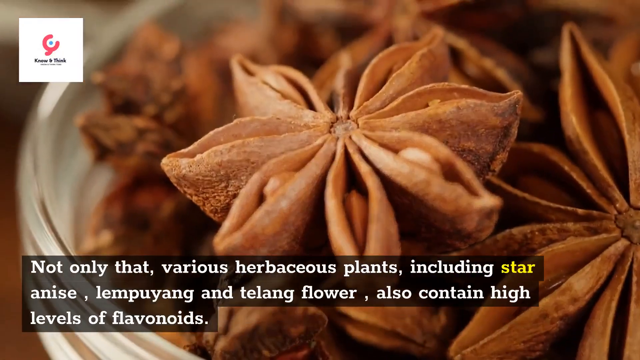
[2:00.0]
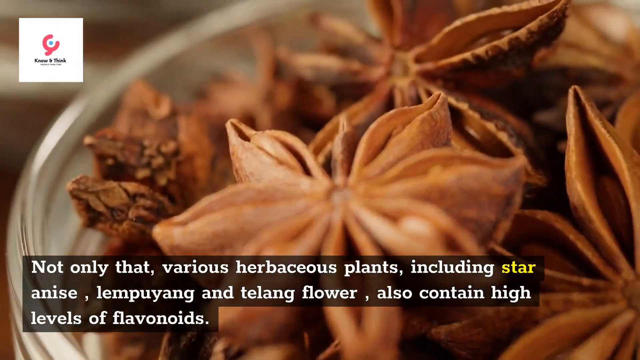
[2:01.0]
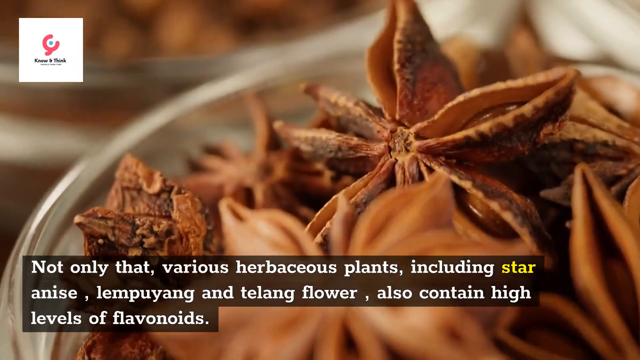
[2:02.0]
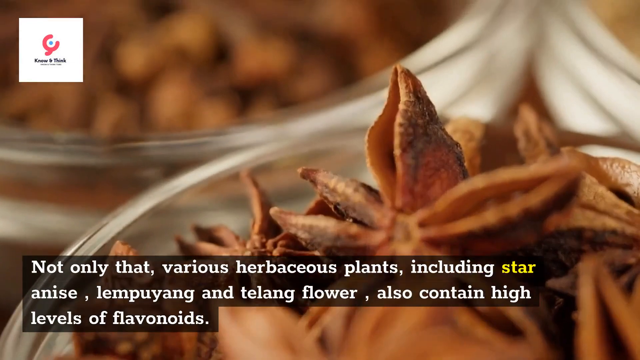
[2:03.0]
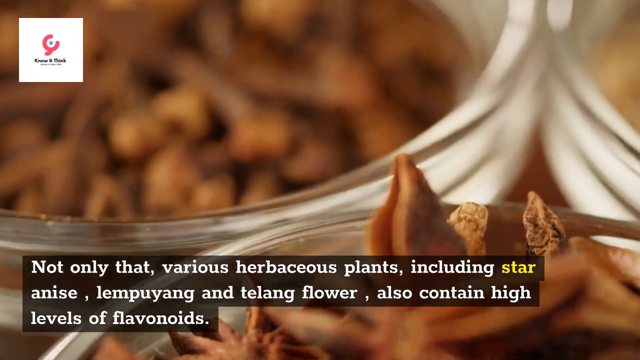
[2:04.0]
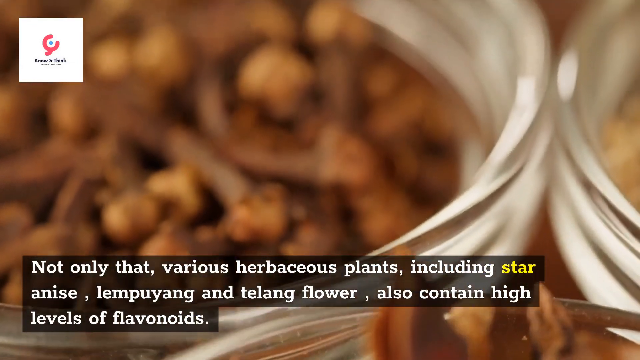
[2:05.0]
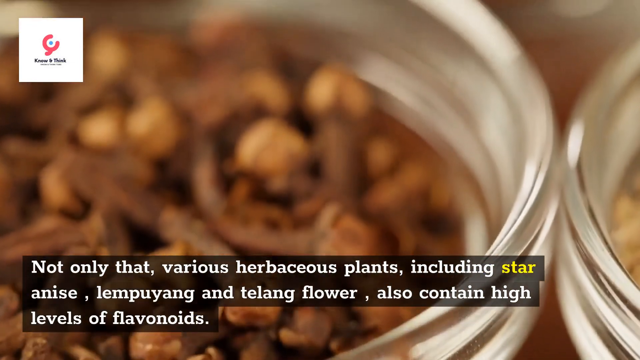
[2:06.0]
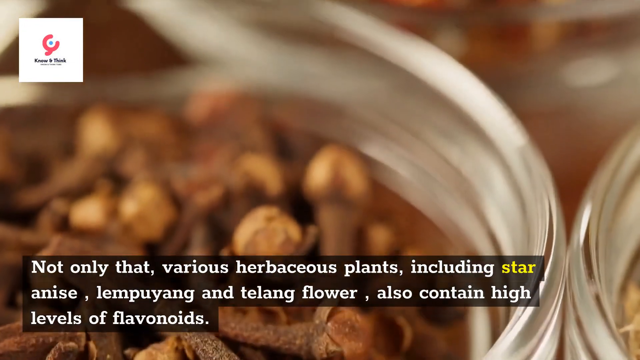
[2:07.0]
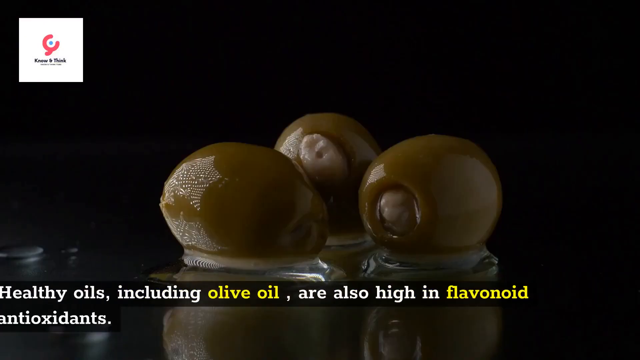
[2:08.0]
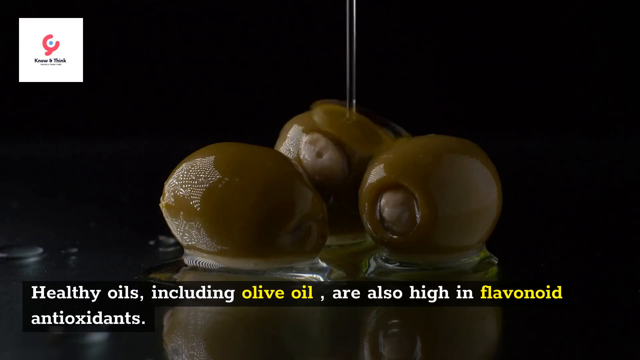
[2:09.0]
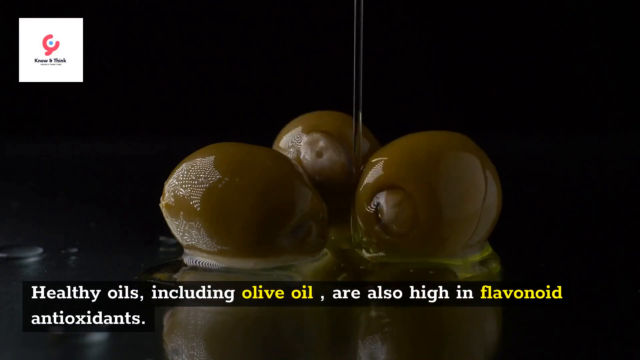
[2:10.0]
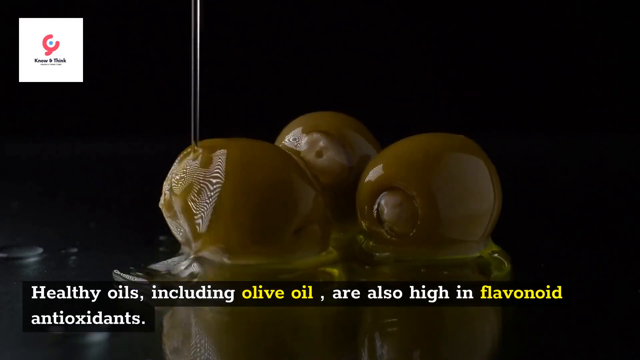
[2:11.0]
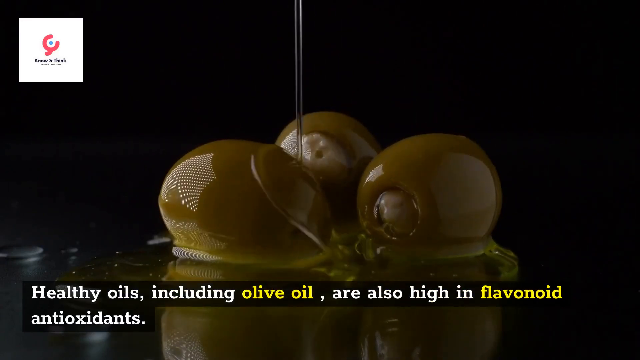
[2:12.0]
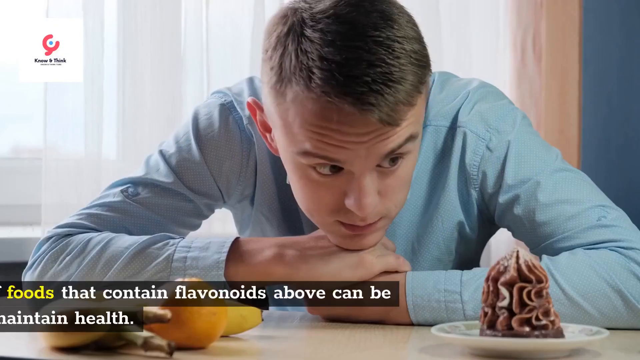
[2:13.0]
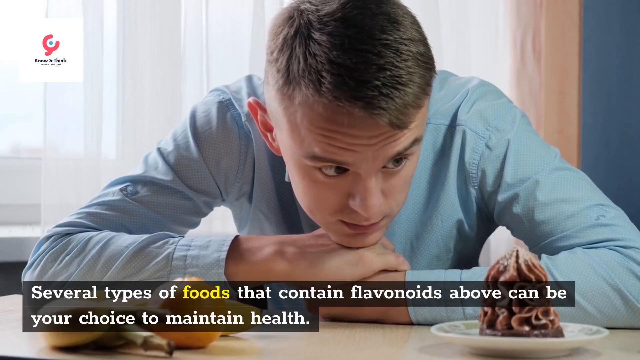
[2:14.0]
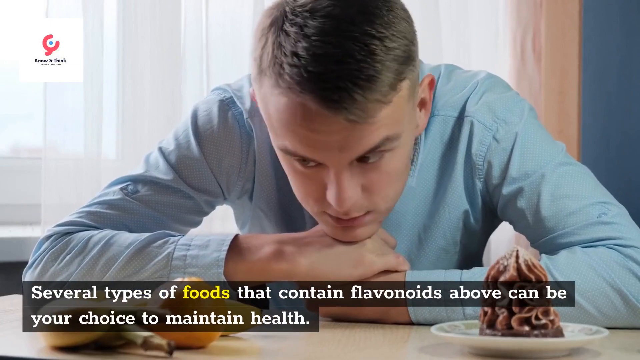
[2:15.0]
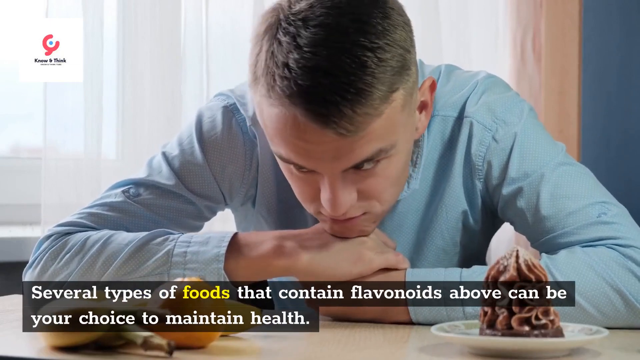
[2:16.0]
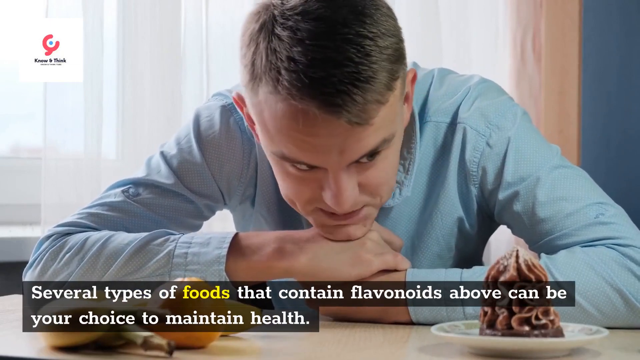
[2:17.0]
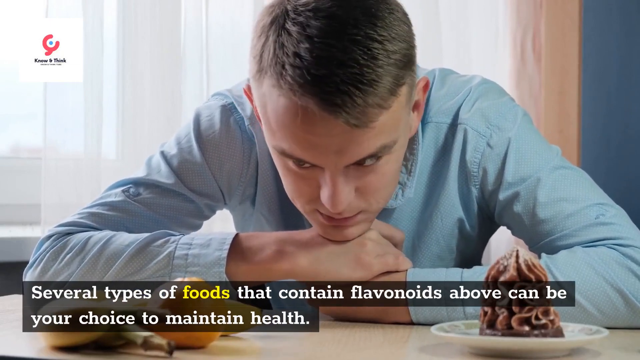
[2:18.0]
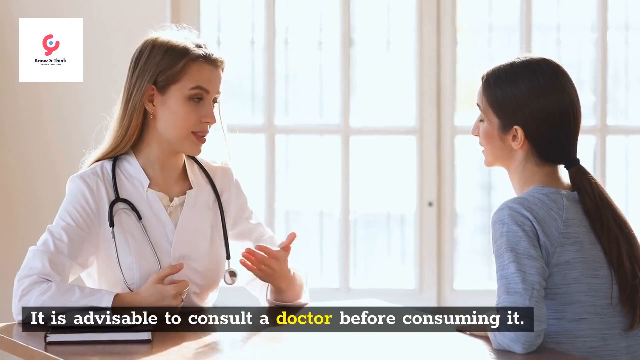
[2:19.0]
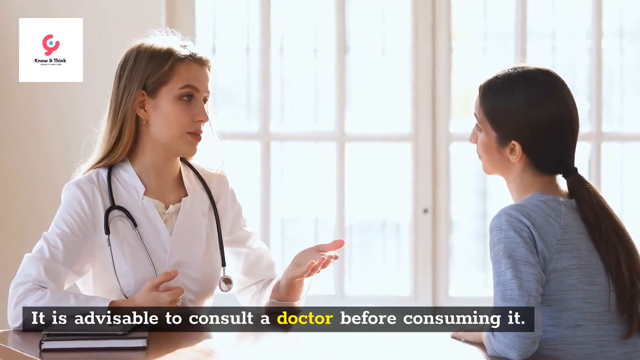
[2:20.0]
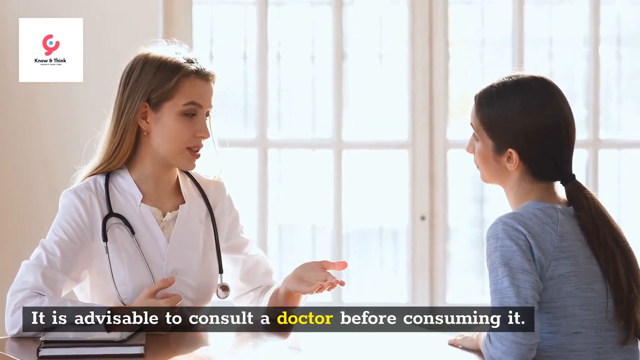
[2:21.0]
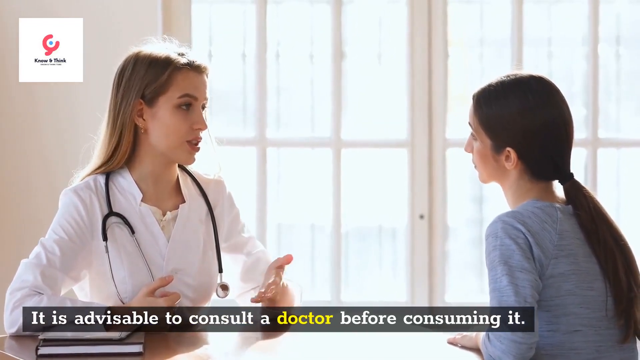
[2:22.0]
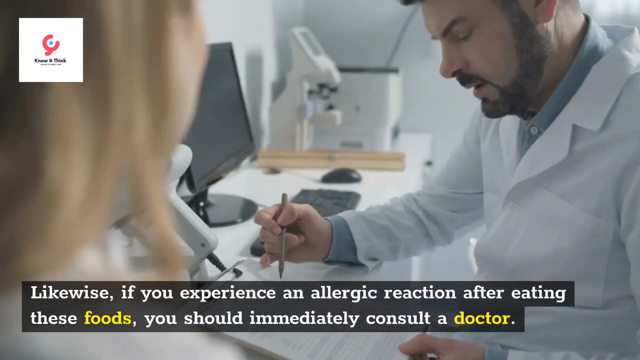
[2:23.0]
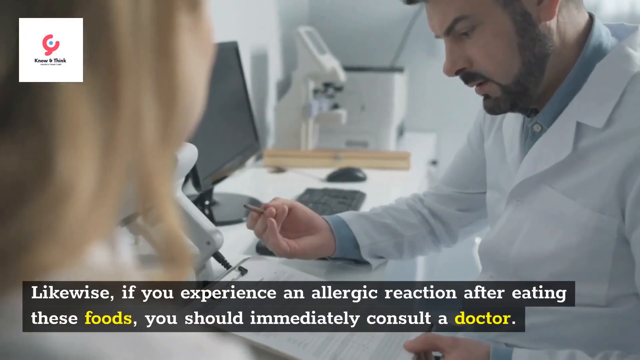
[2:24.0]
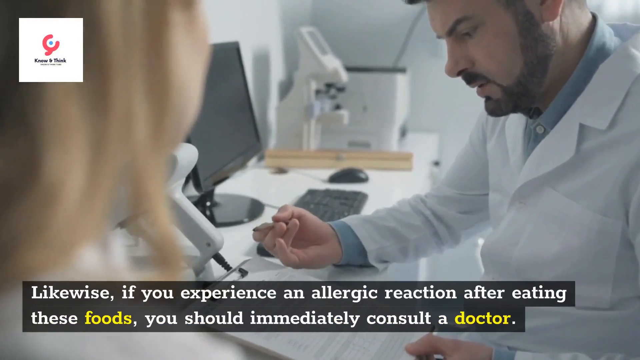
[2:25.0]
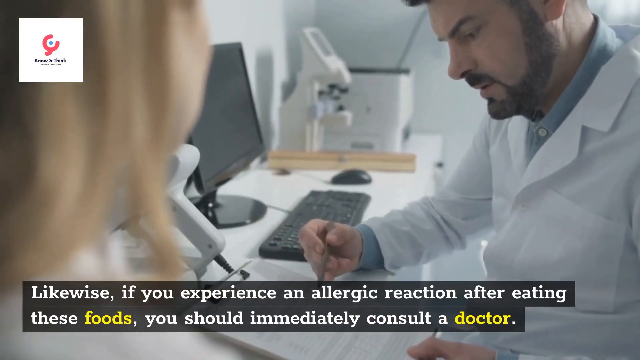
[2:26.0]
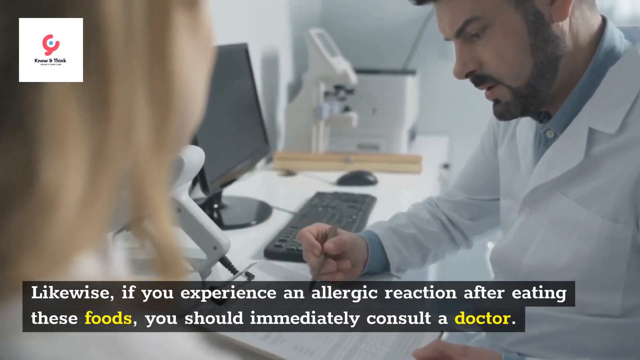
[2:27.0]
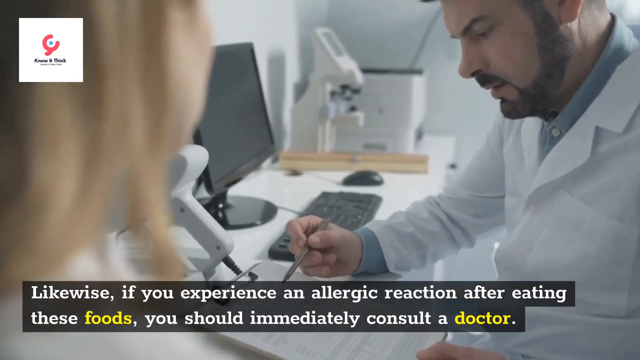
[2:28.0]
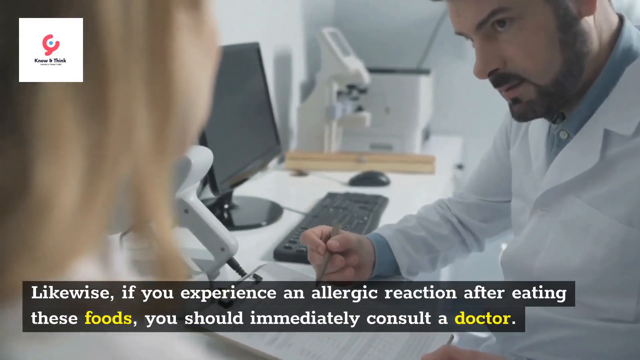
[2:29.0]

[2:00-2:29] A close-up shows star anise, with information at the bottom stating "not only that, various herbaceous plants including star anise and tilang flower also contain high levels of flavonoids." The star anise is brown, and there are three separate bowls containing it. After a transition, three olives are drizzled with olive oil, with text stating that healthy oils including olive oil are also high in flavonoid antioxidants; more olive oil continues to drip and drizzle onto the olives. Next, a younger white man in a long-sleeved blue shirt sits at a table staring at a star anise, looking contemplative and looking back and forth. A final transition shows a health worker talking to another woman; both are women who look relatively young, in their 20s or early 30s, with text stating that it's advisable to consult a doctor before consuming these.